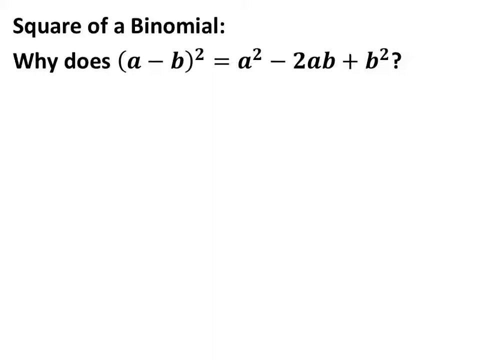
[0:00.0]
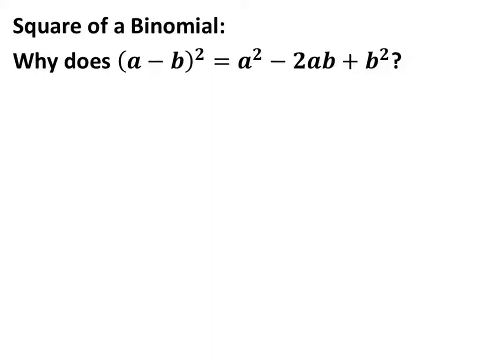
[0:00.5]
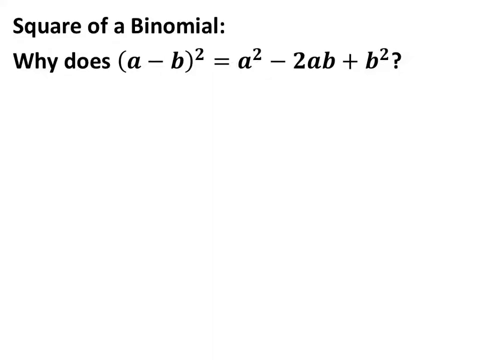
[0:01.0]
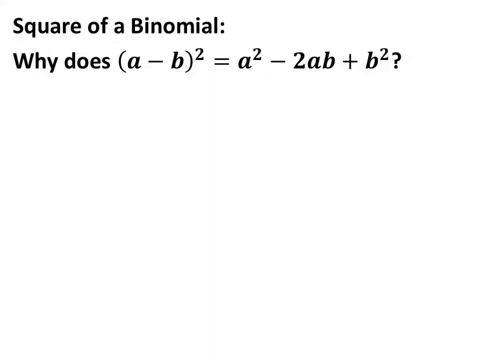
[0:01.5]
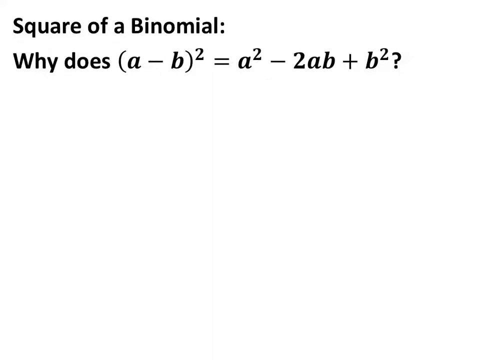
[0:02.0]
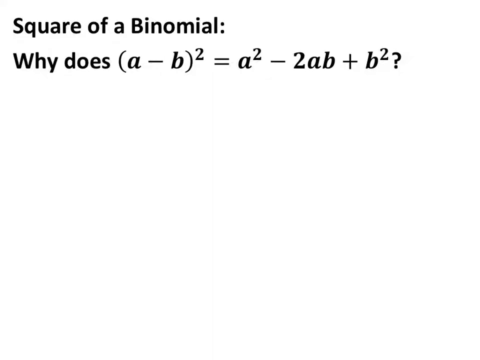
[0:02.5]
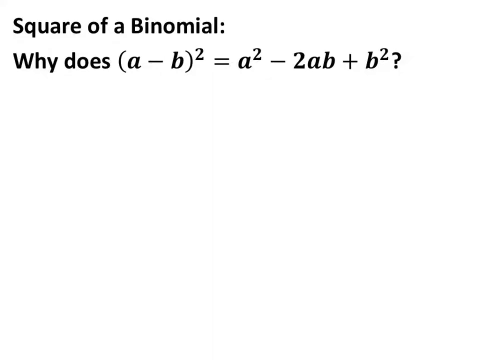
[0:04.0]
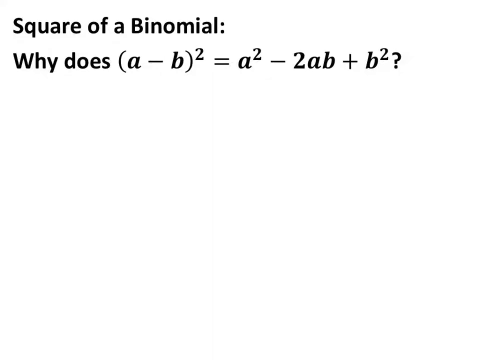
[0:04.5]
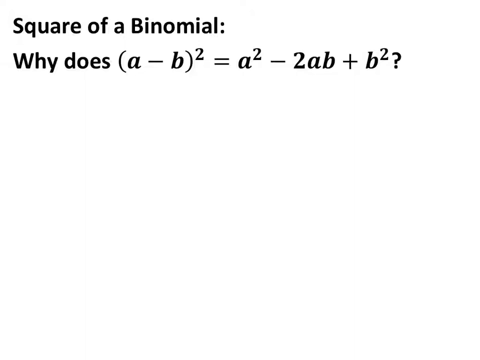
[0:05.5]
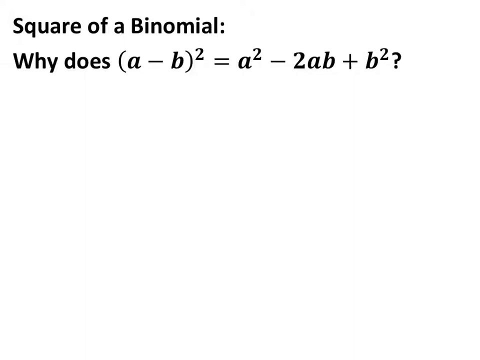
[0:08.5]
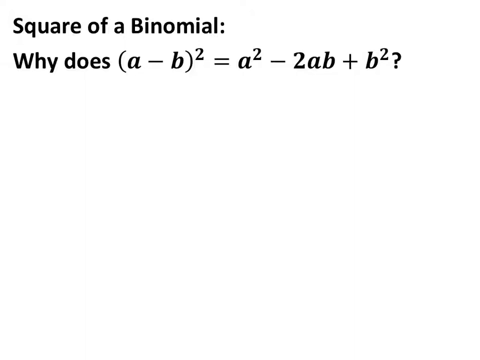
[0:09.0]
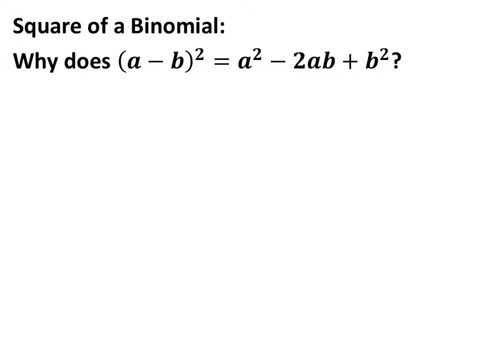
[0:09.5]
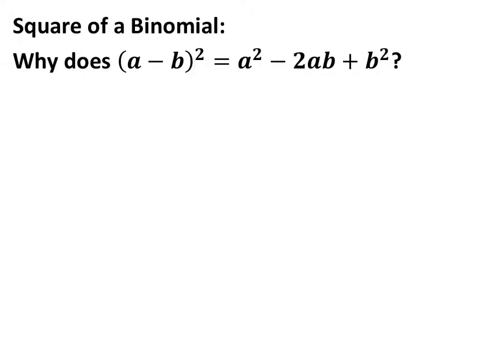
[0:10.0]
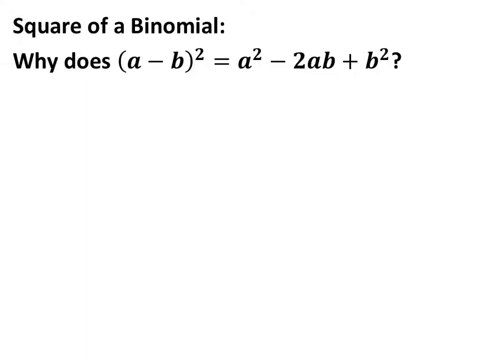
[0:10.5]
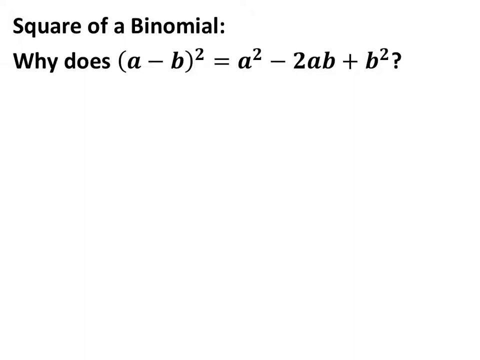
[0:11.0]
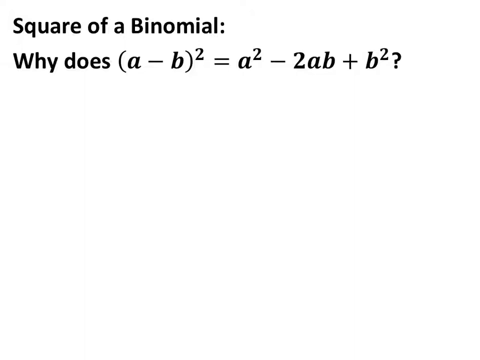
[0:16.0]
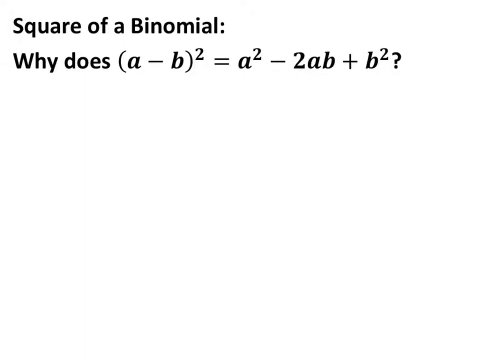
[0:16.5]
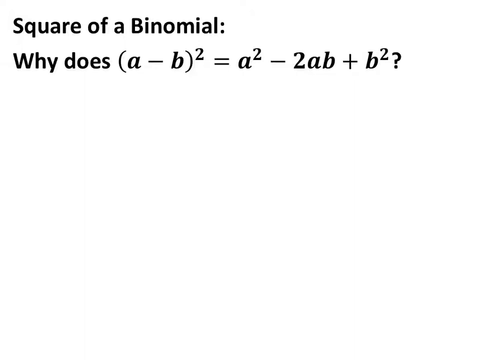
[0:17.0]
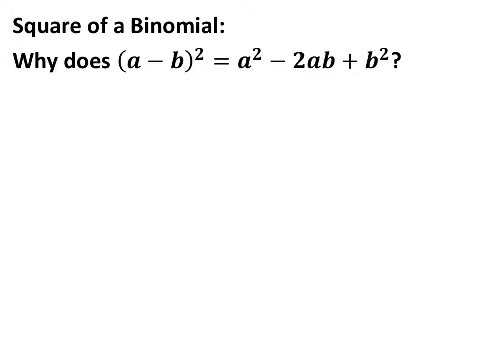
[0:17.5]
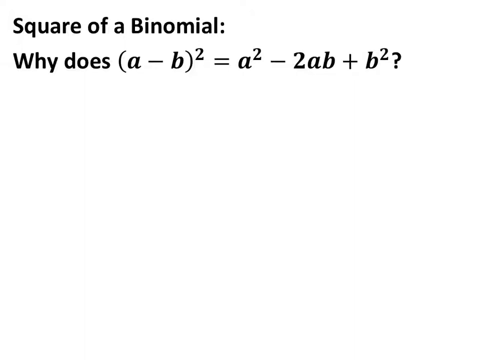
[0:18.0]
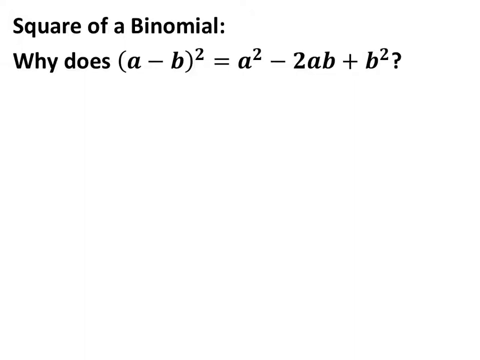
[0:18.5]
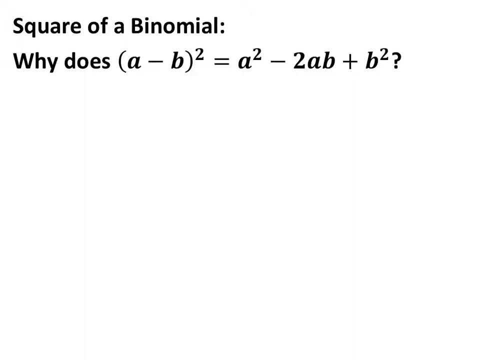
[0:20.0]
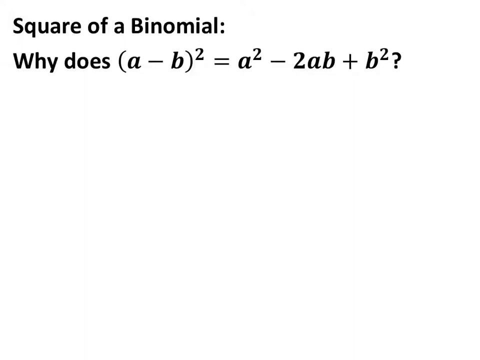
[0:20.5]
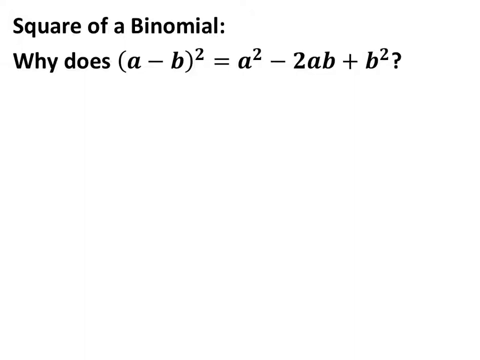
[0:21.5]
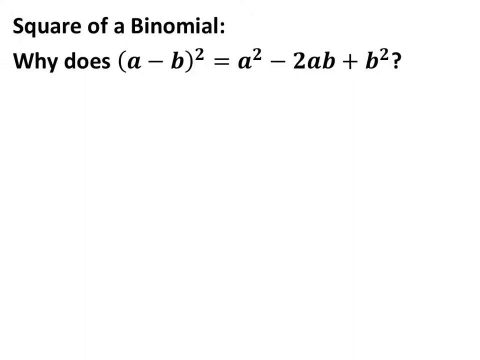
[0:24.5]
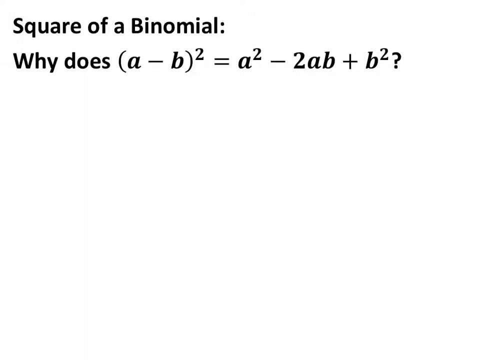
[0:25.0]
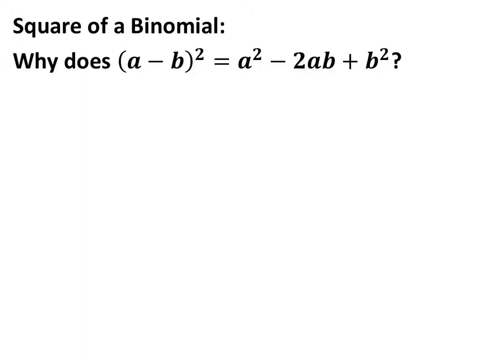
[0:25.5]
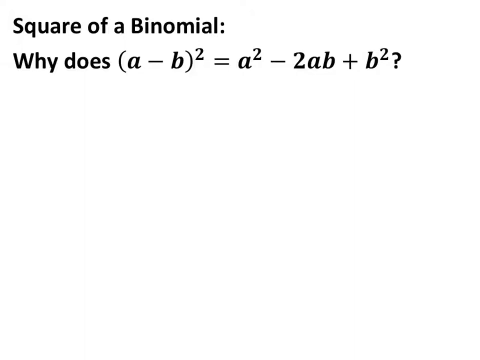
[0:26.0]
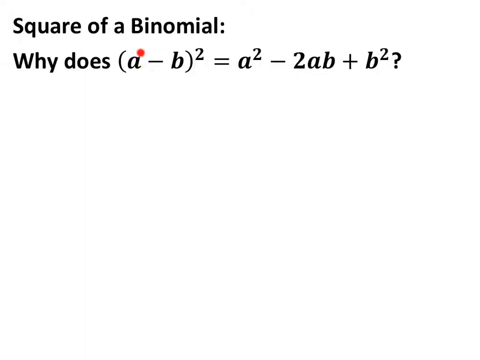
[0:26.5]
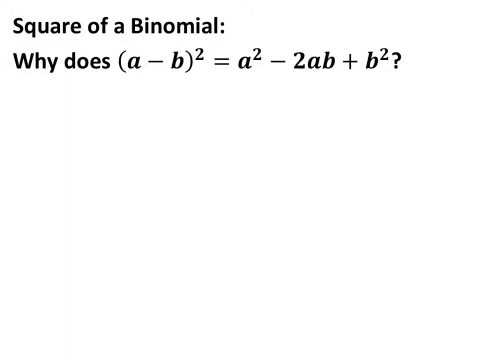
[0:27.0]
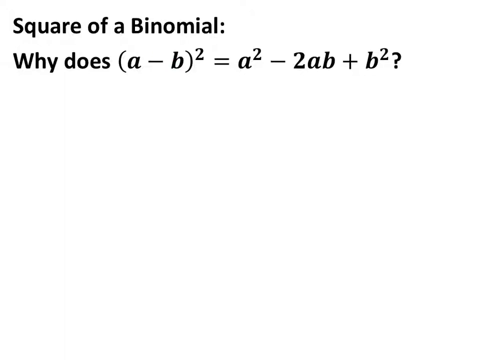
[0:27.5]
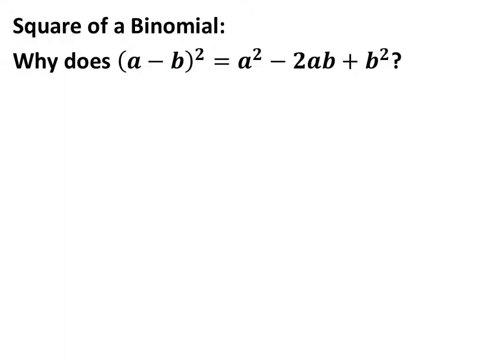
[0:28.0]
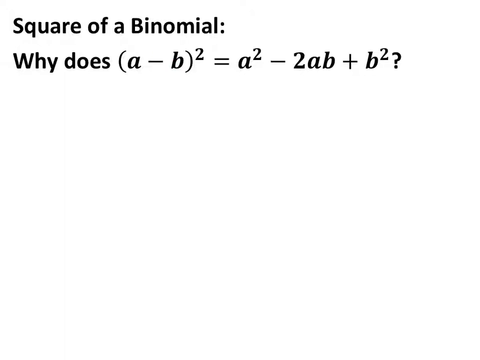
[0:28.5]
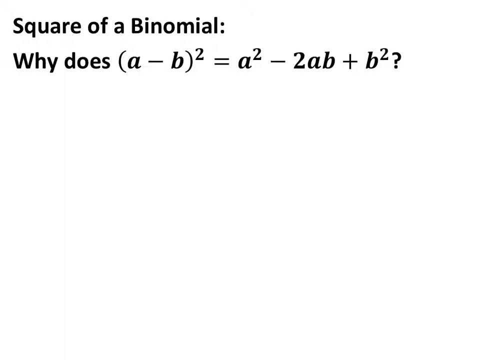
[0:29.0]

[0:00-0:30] Black text on a white background reads "square of a binomial". Below it is the question "Why does (A − B)² = A² − 2AB + B²?" There is a pause for the student to come up with an answer. The teacher's cursor, with a red dot on top of it, moves around the parentheses to point them out, followed by a very long pause. Under the equation there is only white space; the area is quite empty. The video teaches about binomials.